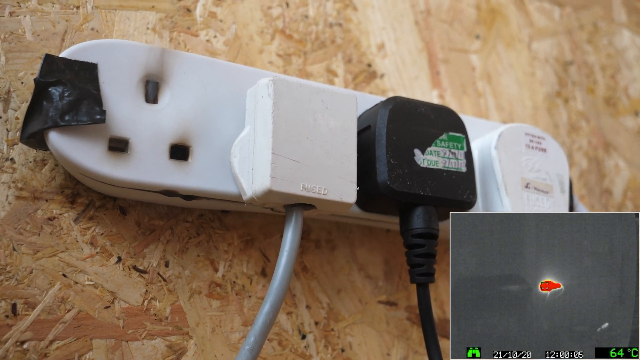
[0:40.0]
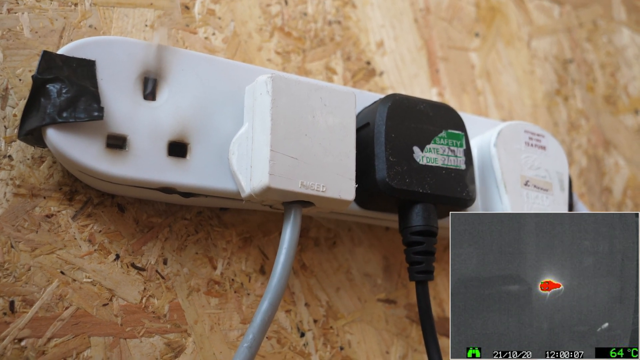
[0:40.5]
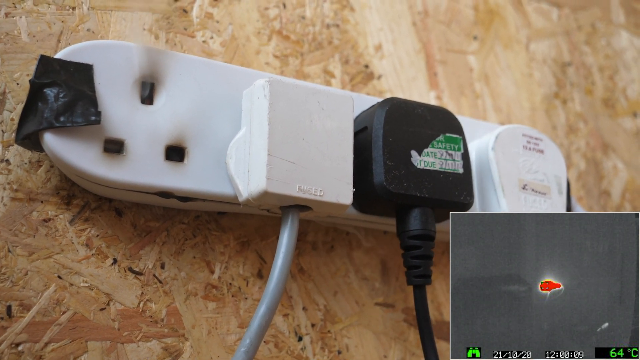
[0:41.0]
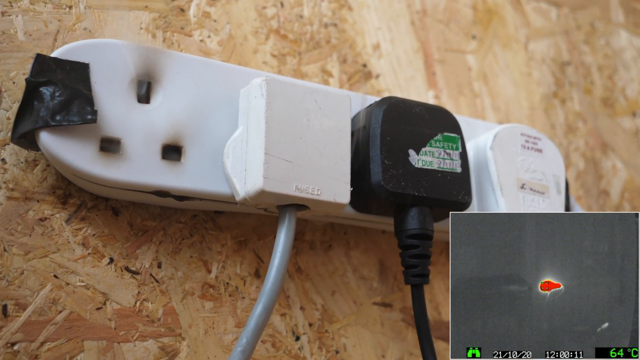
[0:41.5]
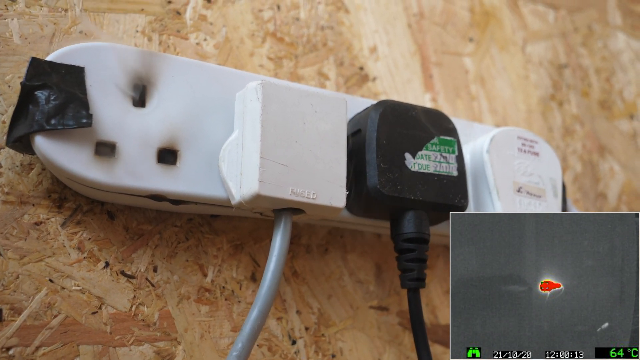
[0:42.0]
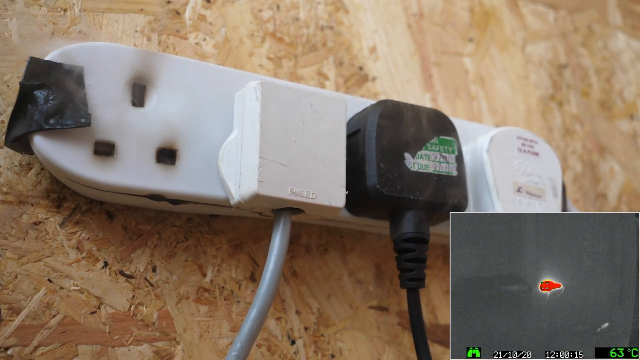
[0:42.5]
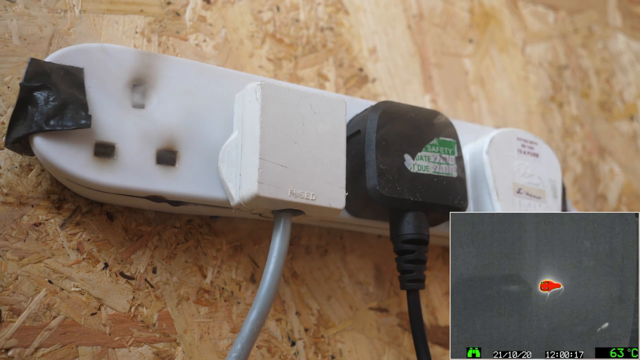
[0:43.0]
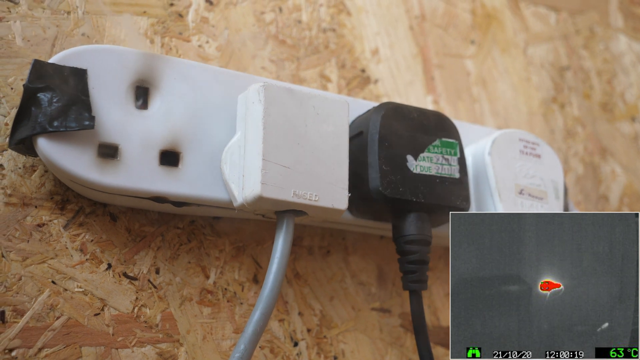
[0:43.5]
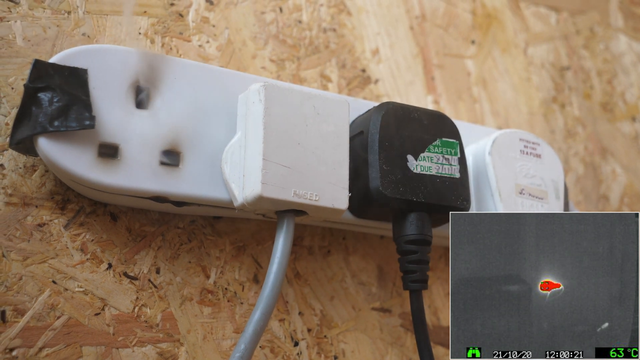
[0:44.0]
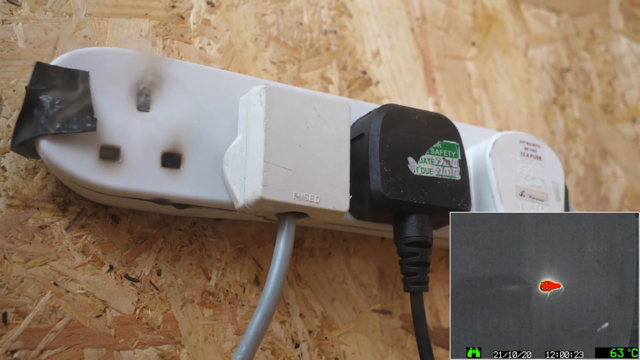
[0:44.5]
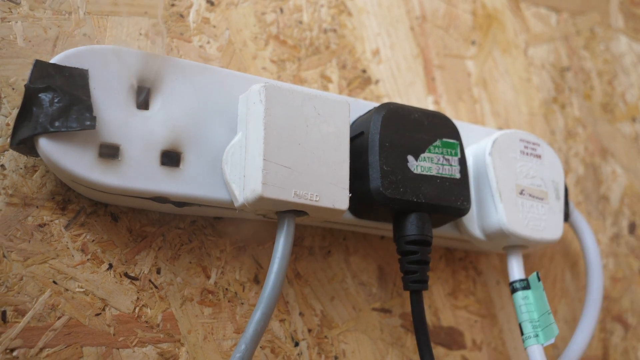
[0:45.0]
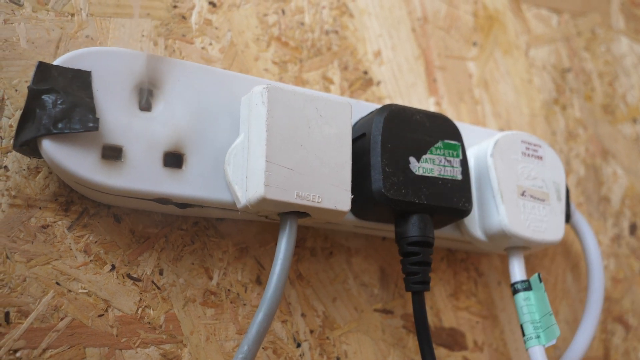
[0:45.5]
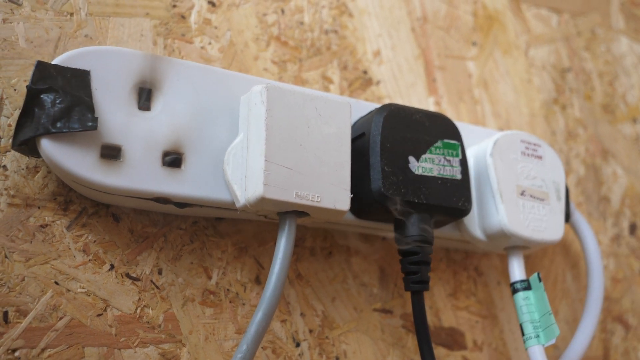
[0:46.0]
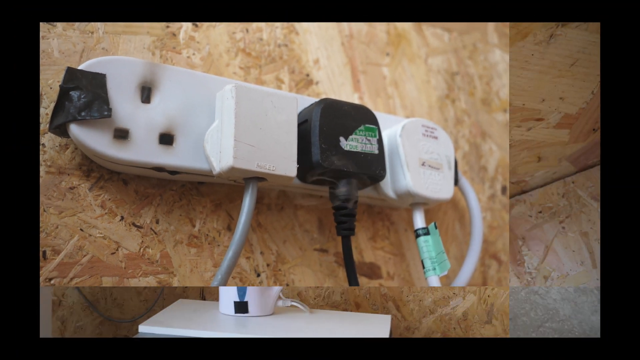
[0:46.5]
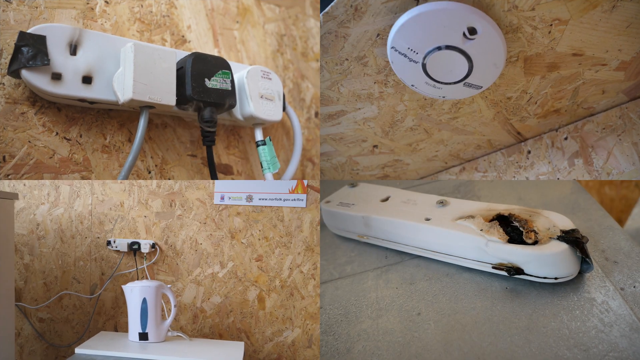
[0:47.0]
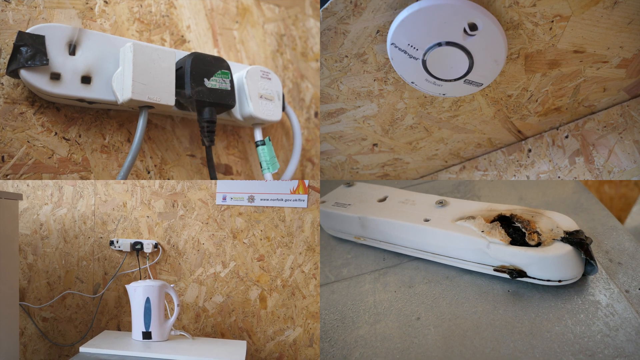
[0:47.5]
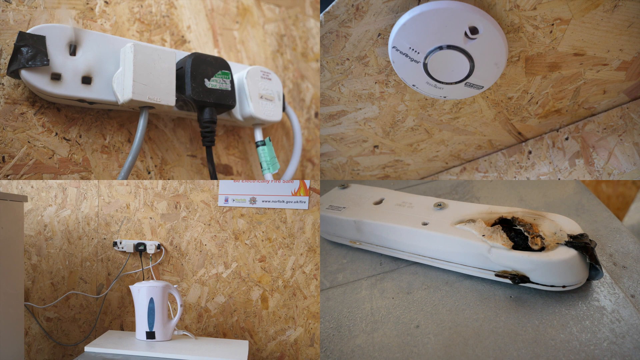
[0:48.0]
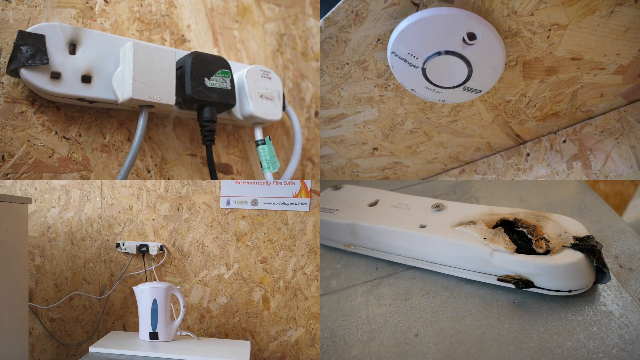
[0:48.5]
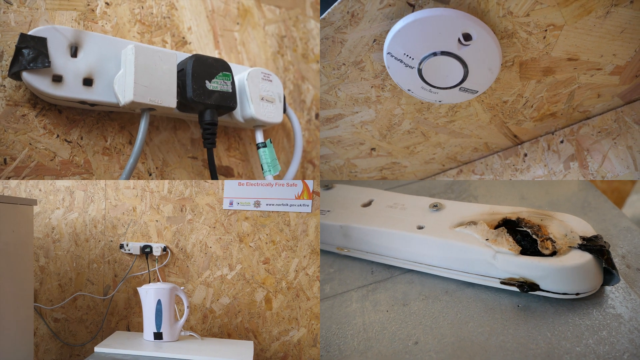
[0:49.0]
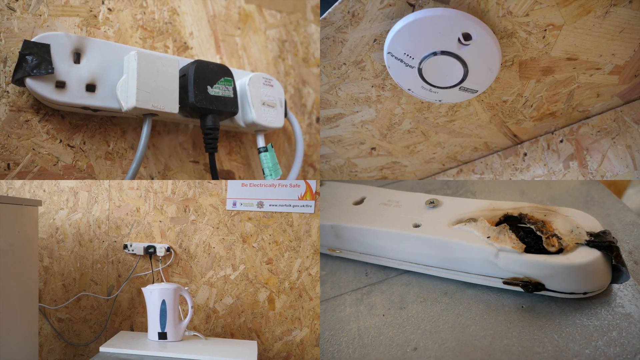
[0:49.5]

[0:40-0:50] Smoke is coming out of the empty plug socket holes. Then the burnt extension lead appears in the bottom right-hand corner, a circular smoke detector attached to a ceiling in the top right-hand corner, the overloaded plug socket with smoke coming out of it in the top left, with the two white plugs, one with a grey lead and one with a white lead, and the black plug with a black lead, and in the bottom left the kettle stood on top of the washing machine, plugged into the wall socket.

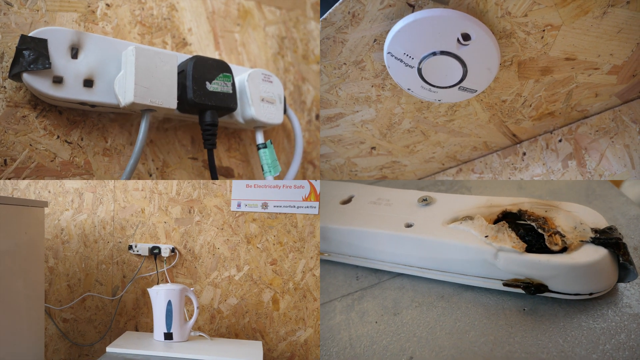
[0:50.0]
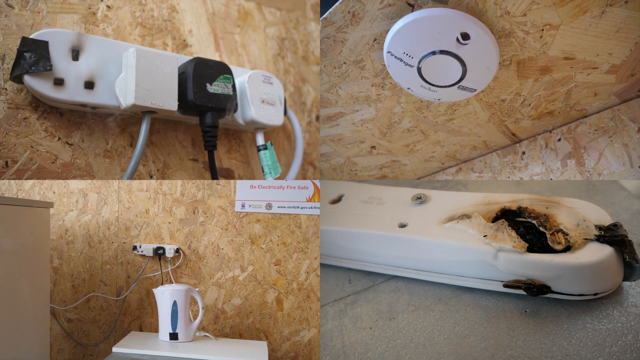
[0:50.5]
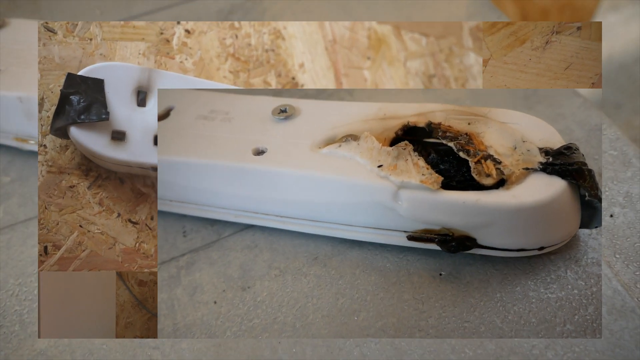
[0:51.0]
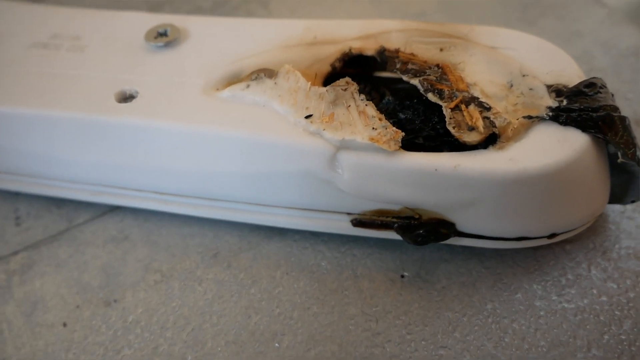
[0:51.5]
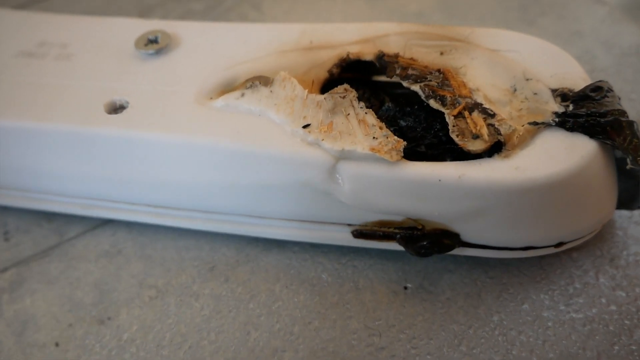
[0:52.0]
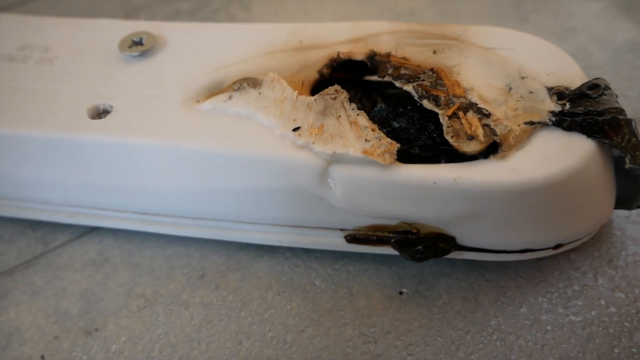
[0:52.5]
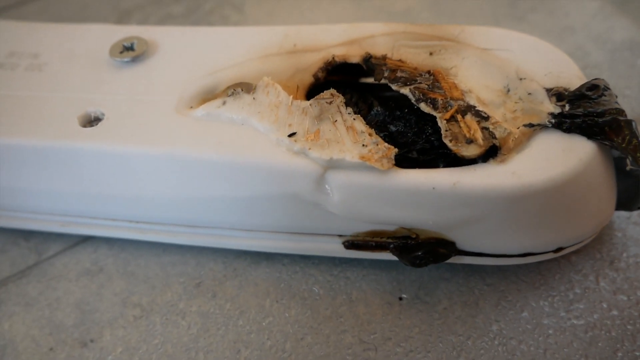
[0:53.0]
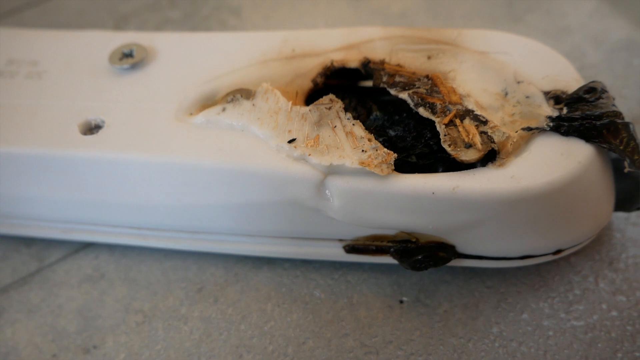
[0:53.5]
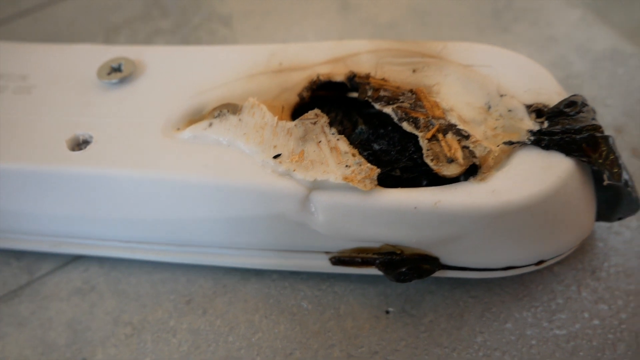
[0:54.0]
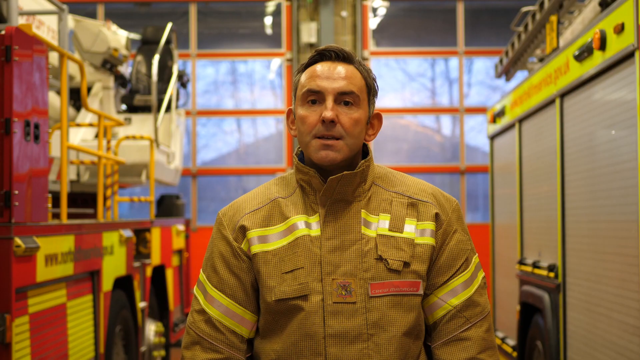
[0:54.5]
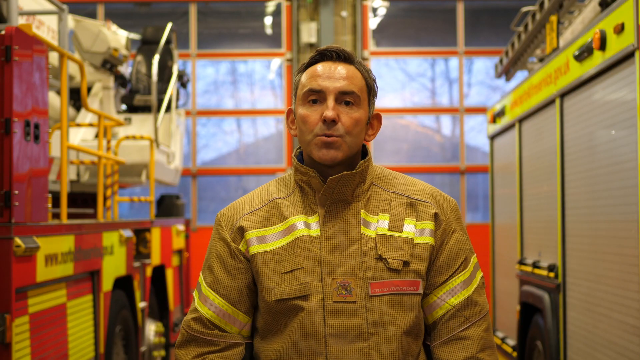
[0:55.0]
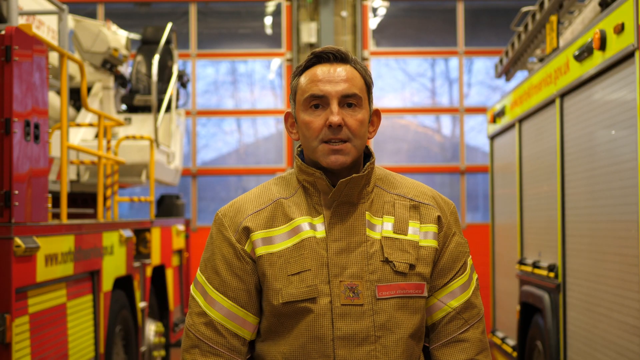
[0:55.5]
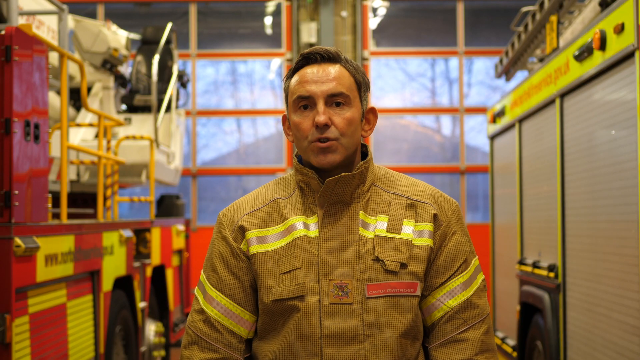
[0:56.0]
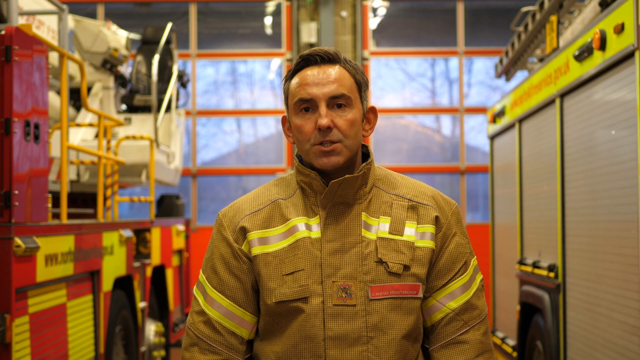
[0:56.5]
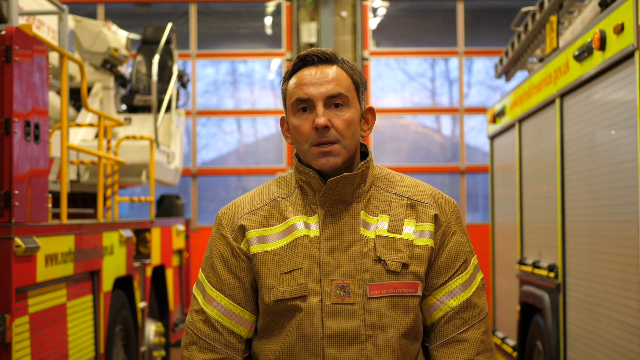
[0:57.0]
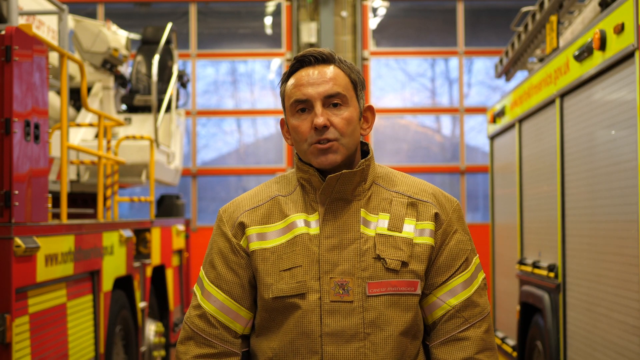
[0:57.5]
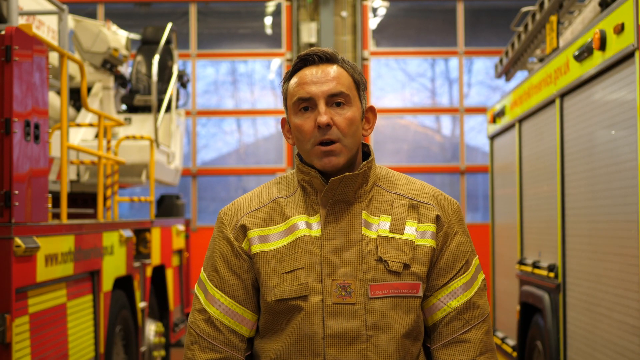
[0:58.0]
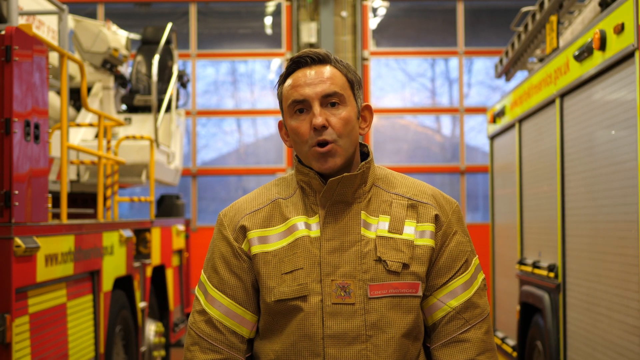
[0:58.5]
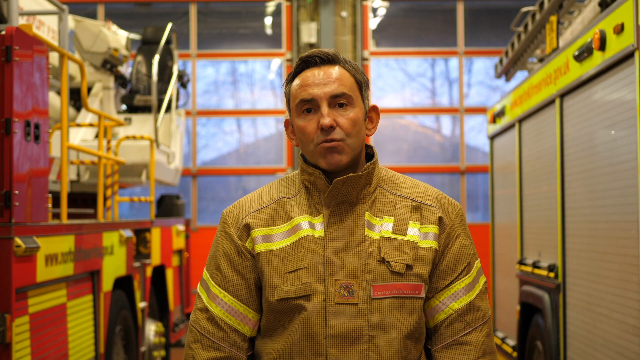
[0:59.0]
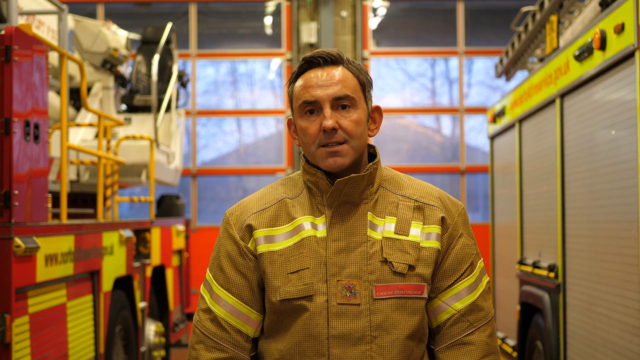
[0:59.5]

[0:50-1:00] A cracked, broken and blackened section of the extension lead is shown. On it is a large crack that is black in the centre and charred brown around the edges. There are two screw holes: the top one contains a silver screw and the bottom one has its screw missing. A piece of black electrical tape is fastened to the right-hand side of the extension lead. The video then cuts to the fireman speaking towards the camera, stood in front of the fire doors, with a fire engine to the right and another fire vehicle to the left. His forehead is quite shiny.